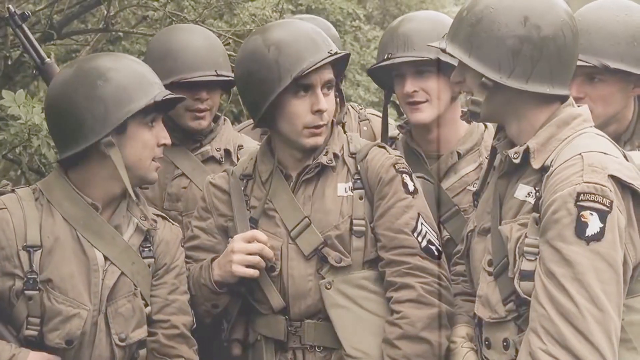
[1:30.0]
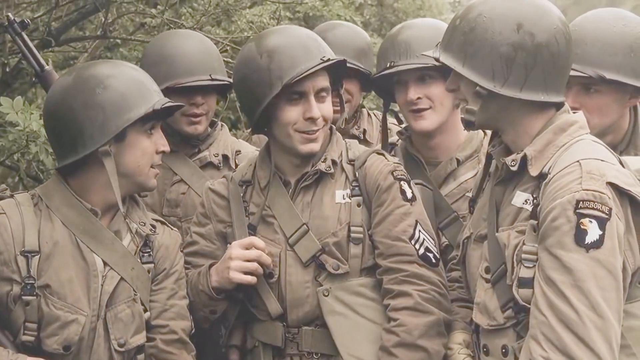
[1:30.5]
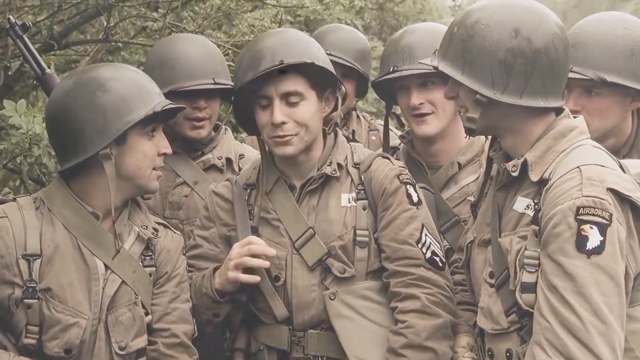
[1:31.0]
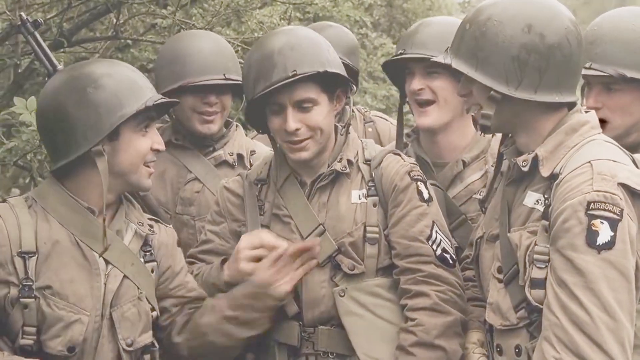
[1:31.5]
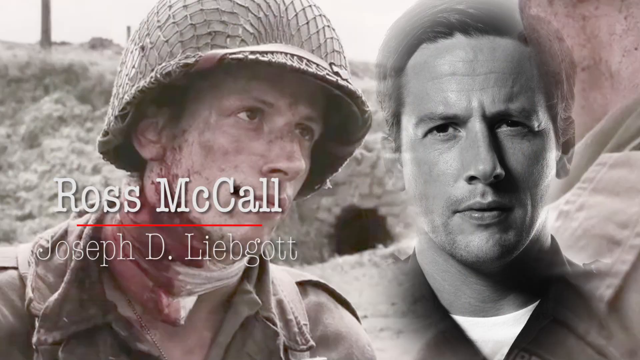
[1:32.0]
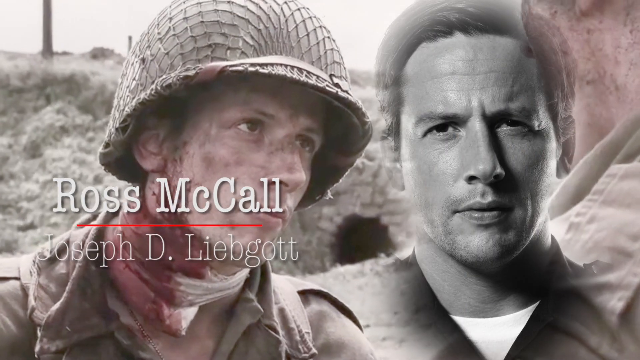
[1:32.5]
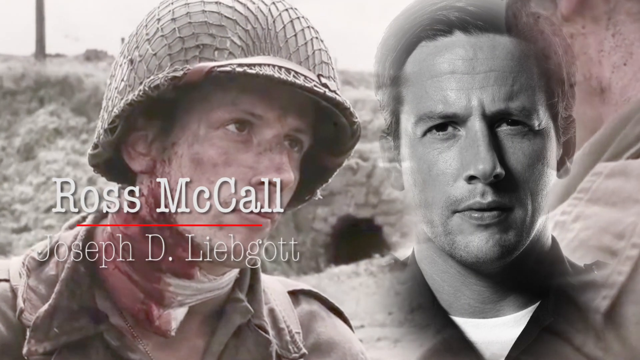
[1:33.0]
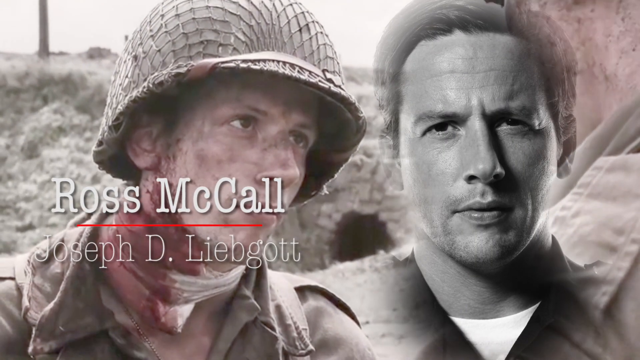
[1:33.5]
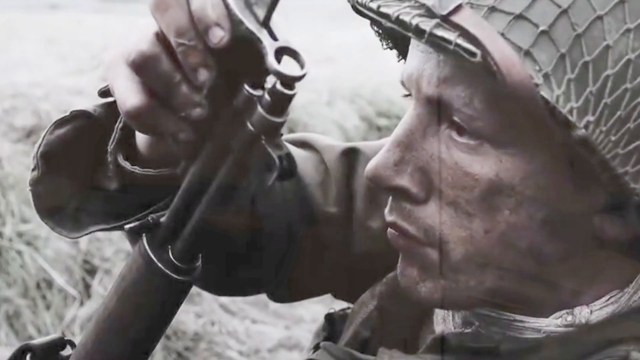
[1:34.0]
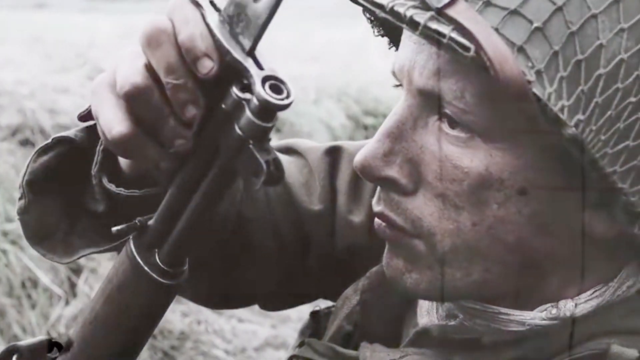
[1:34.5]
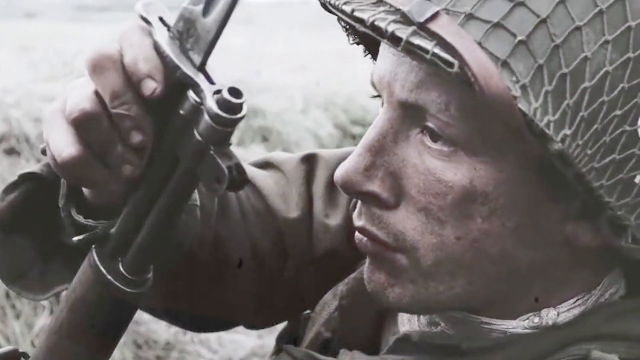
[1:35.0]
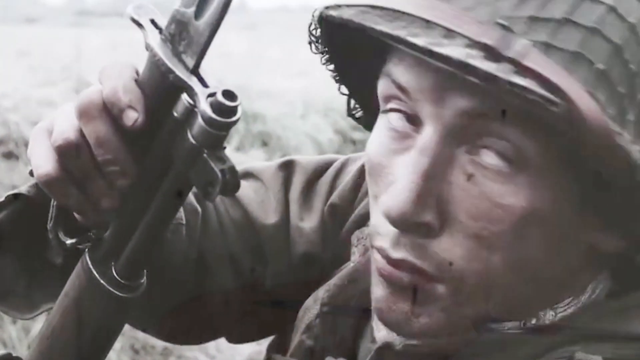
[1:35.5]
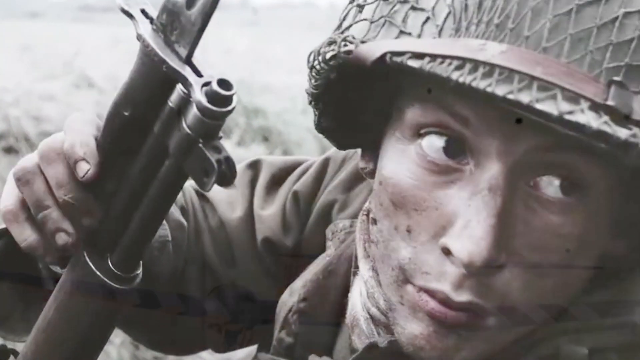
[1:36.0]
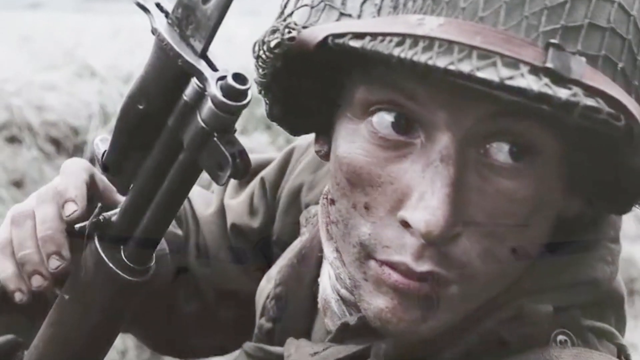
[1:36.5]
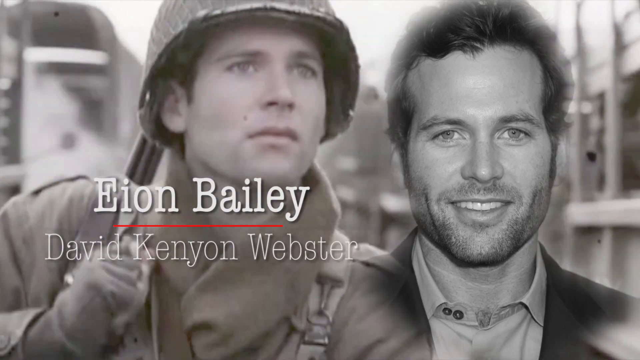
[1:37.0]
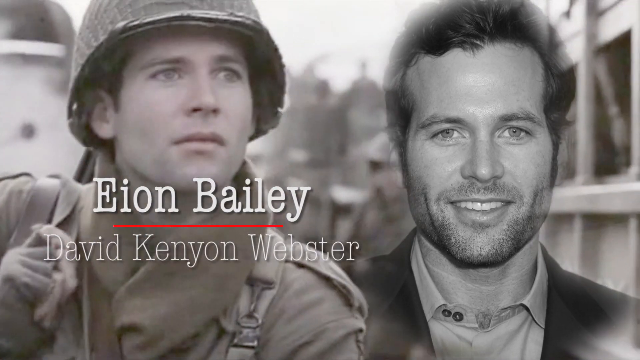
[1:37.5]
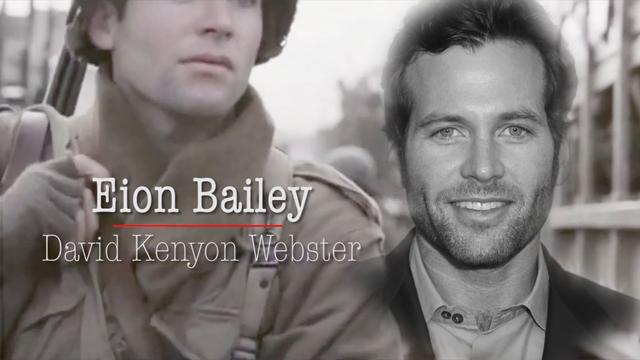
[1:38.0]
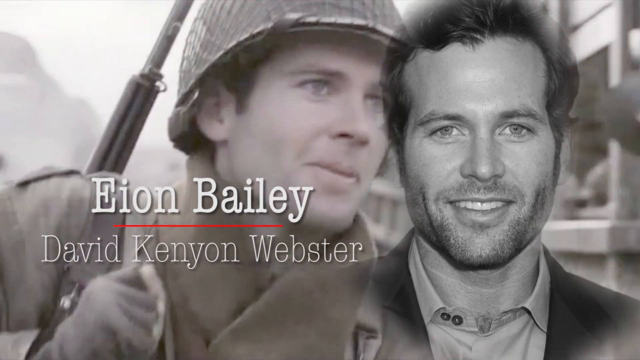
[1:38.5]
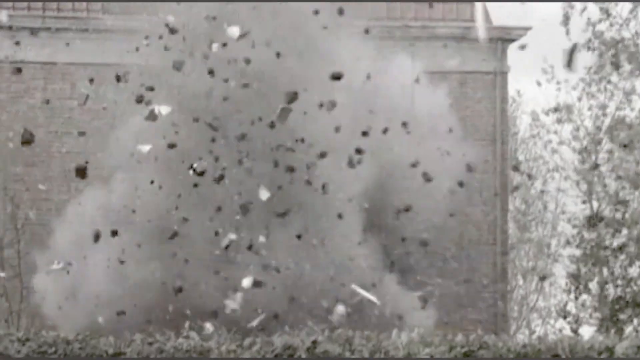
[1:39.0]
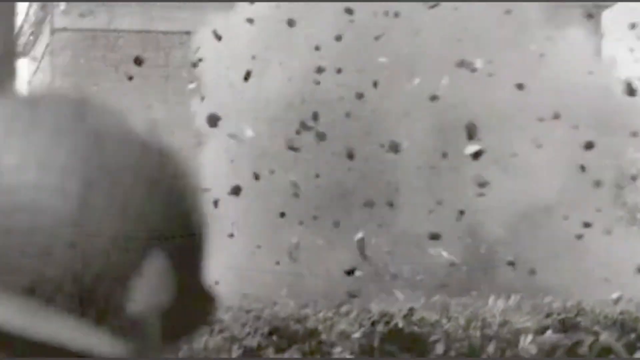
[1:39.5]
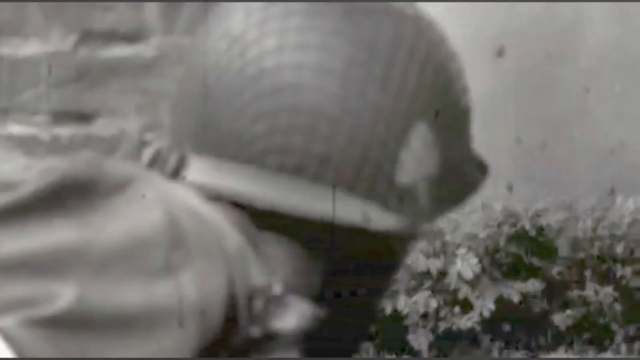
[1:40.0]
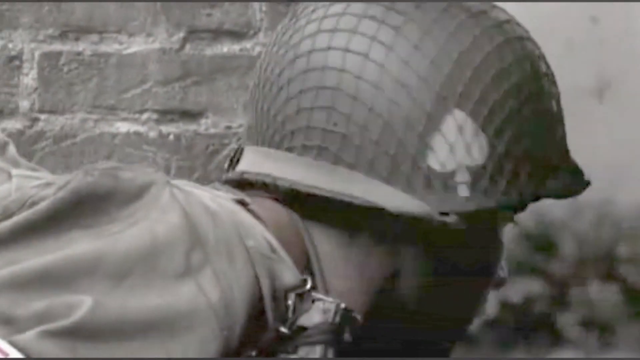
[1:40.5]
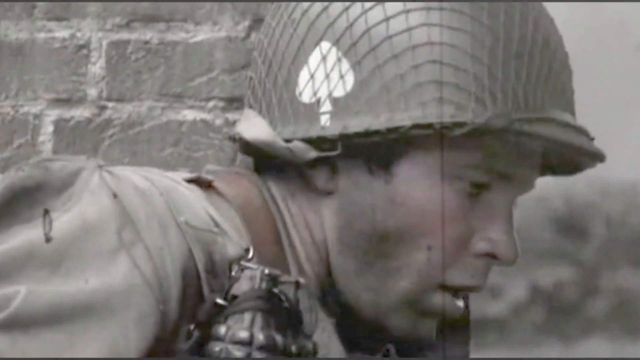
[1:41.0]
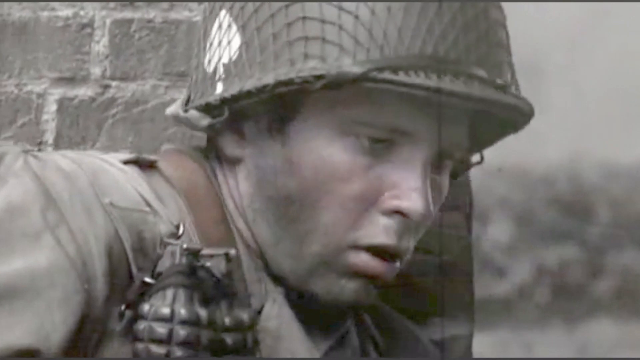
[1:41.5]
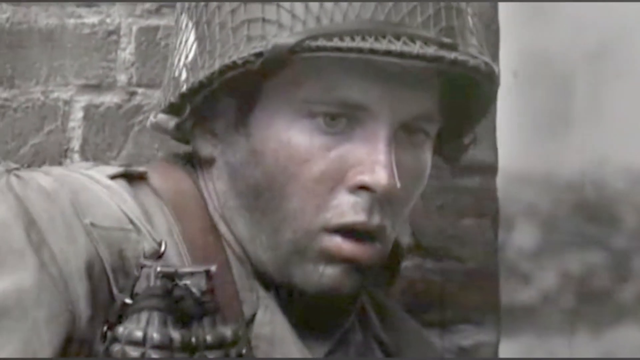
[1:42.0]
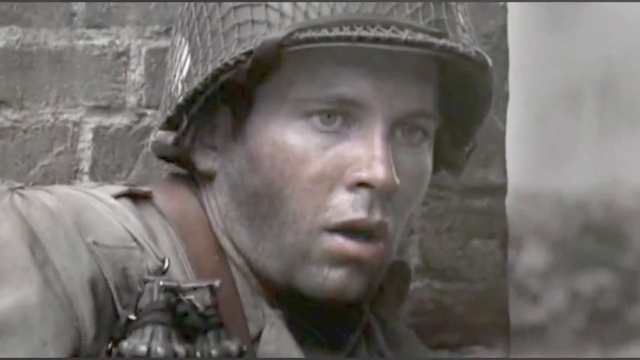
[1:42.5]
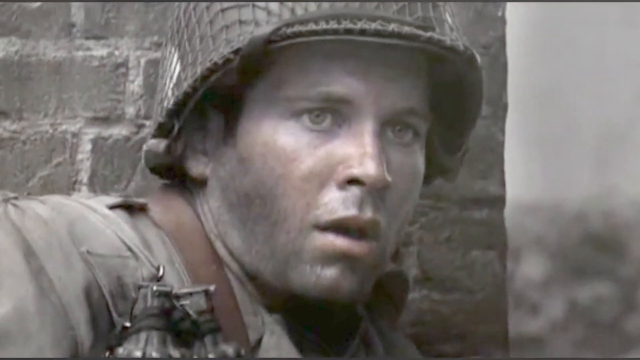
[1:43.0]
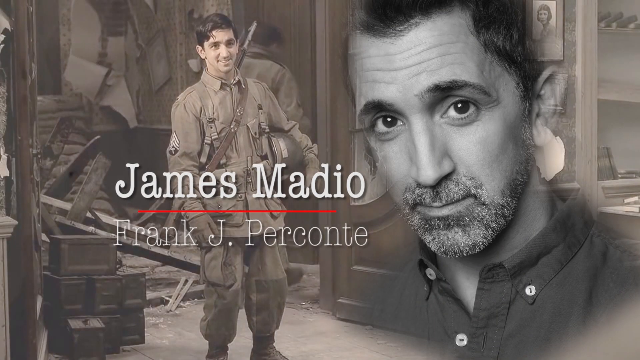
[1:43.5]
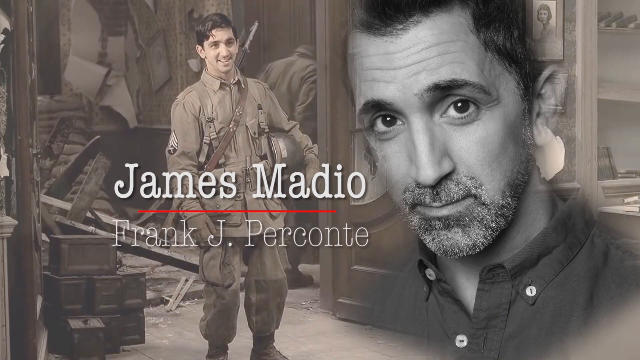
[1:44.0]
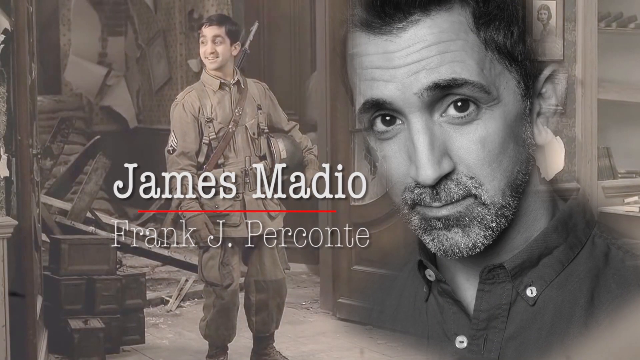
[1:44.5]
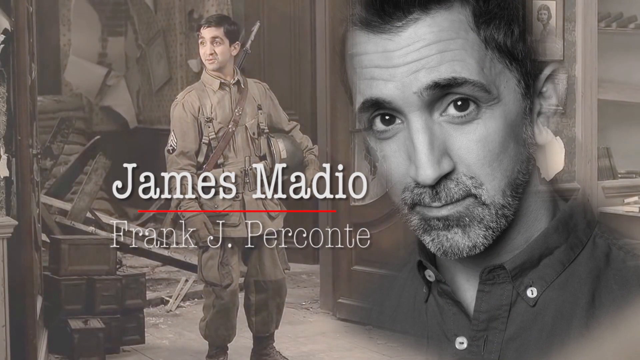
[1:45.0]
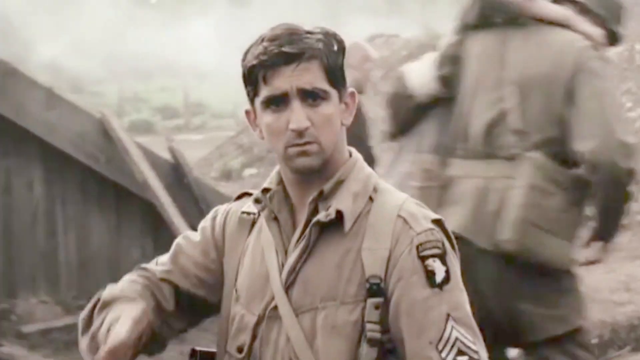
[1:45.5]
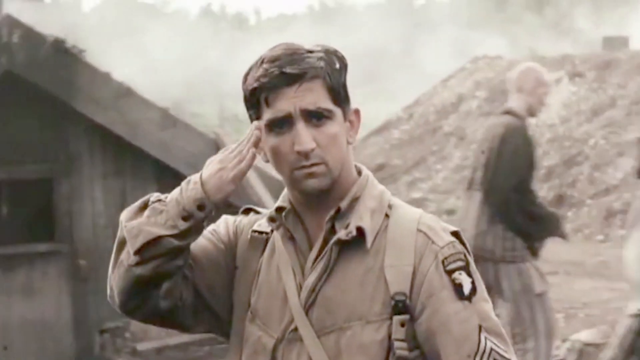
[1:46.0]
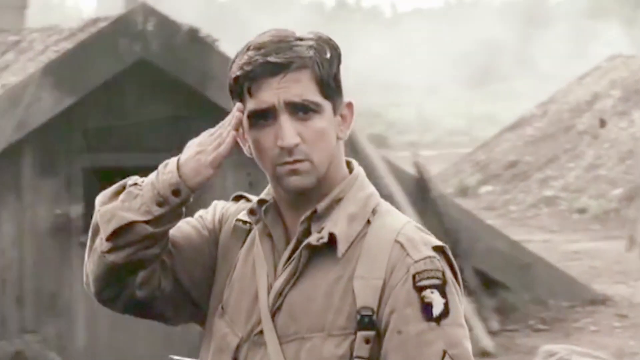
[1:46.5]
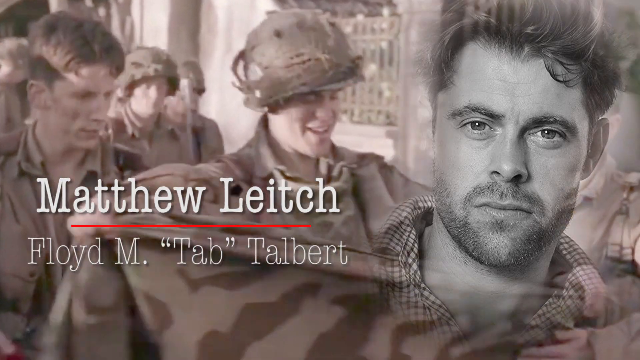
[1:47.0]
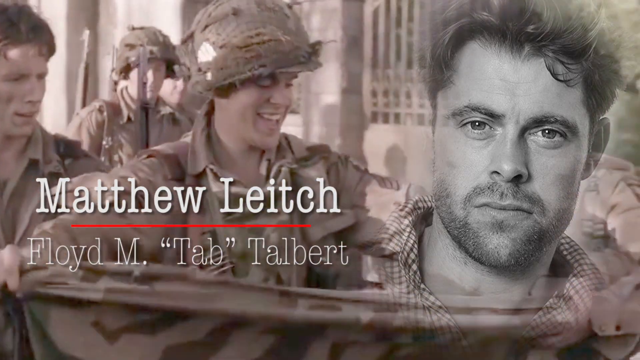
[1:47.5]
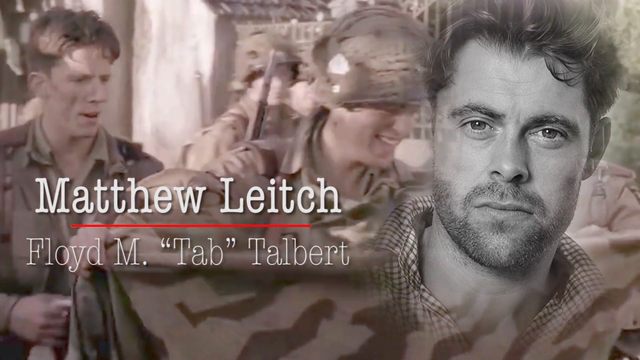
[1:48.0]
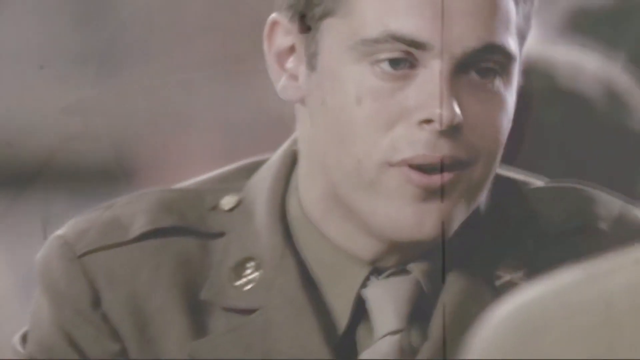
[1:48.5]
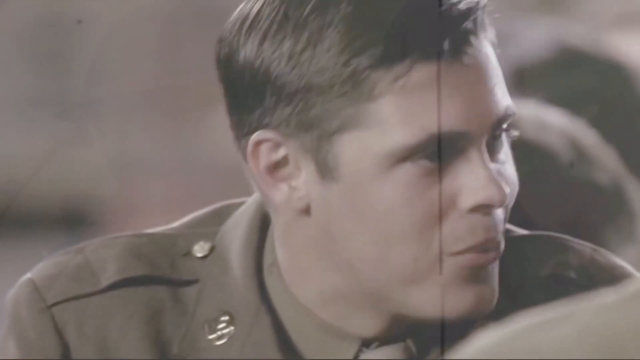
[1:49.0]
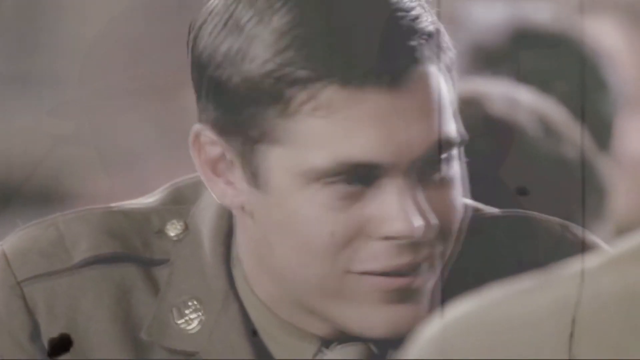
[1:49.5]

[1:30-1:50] Six soldiers talk in a scene from the movie. Actors are credited: Ross McCall, introduced with slow-motion footage of him in the movie, then Elon or Eon Bailey. Footage shows a house or something being bombed, with a blast coming out of it. Another soldier is revealed as actor James Medina, and another soldier salutes the camera, credited as Matthew Leach. Douglas Fang is also credited. The colors are not bright but old-fashioned, like 1950s or 1960s color.